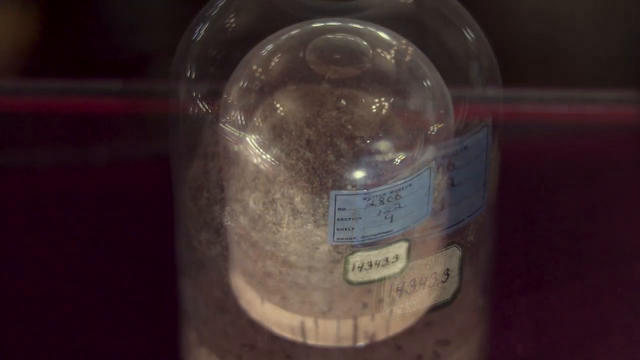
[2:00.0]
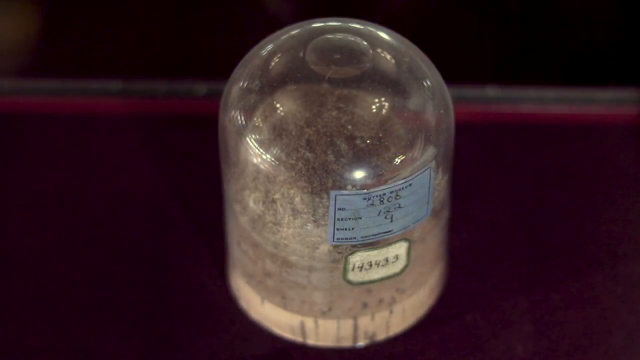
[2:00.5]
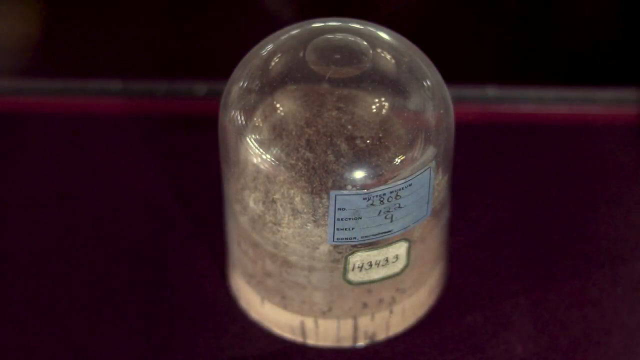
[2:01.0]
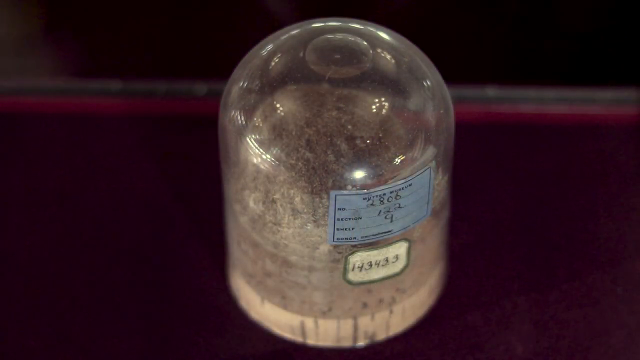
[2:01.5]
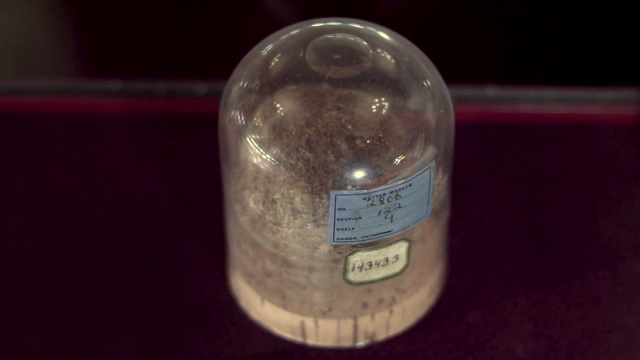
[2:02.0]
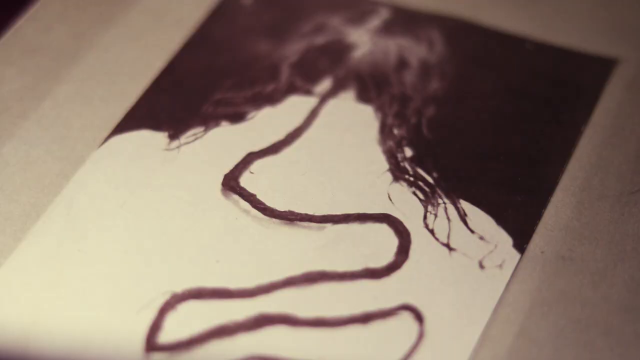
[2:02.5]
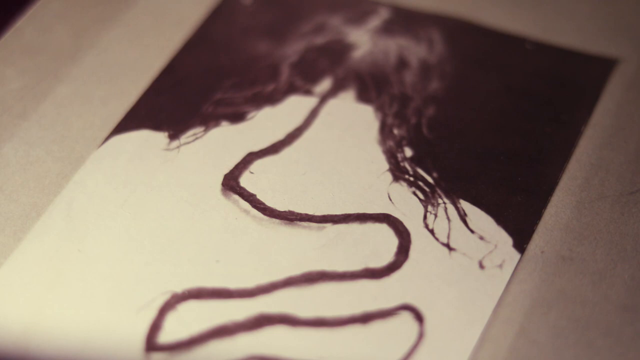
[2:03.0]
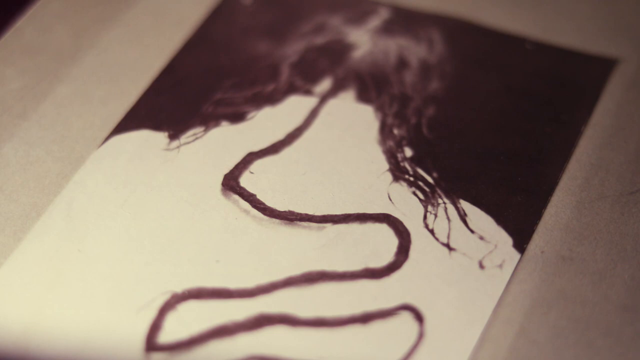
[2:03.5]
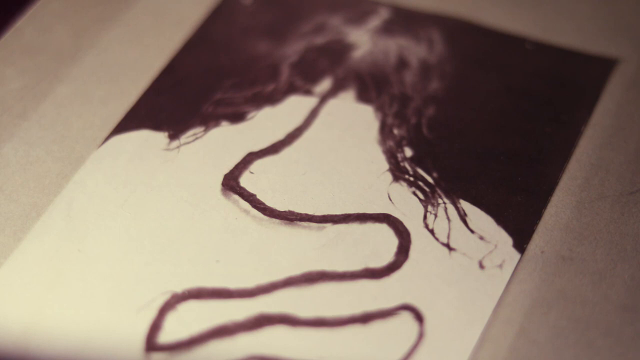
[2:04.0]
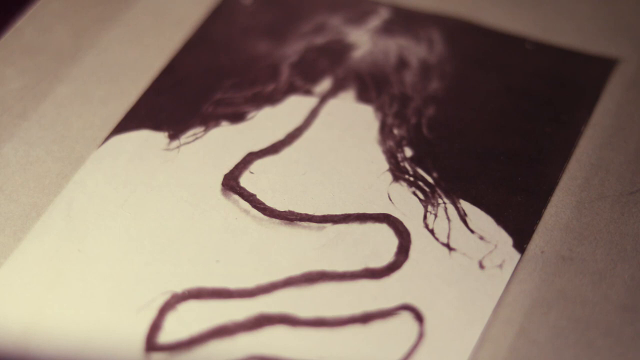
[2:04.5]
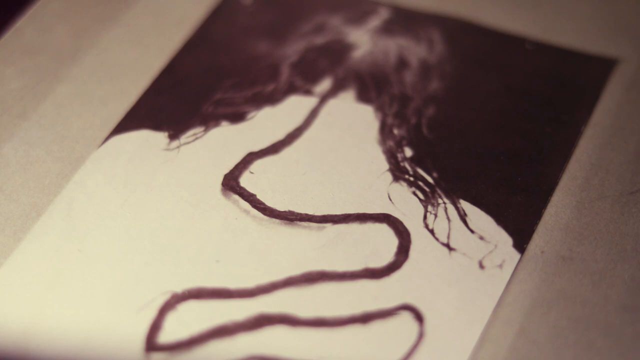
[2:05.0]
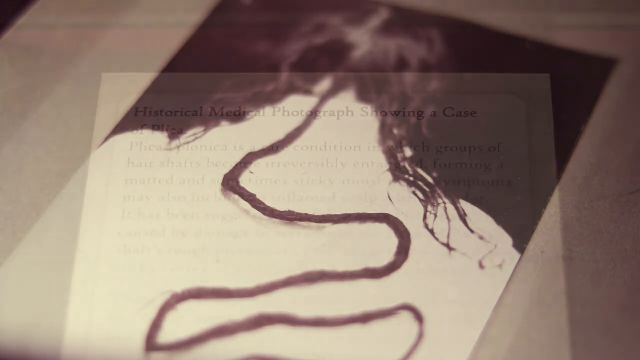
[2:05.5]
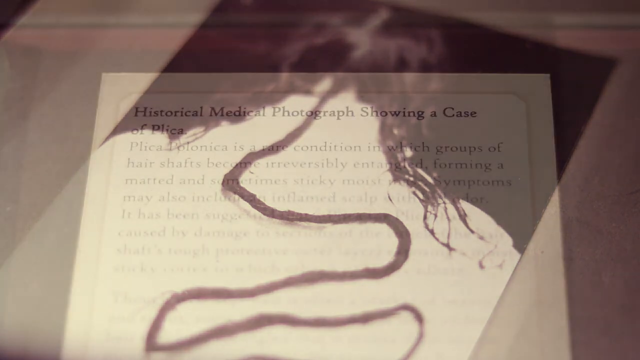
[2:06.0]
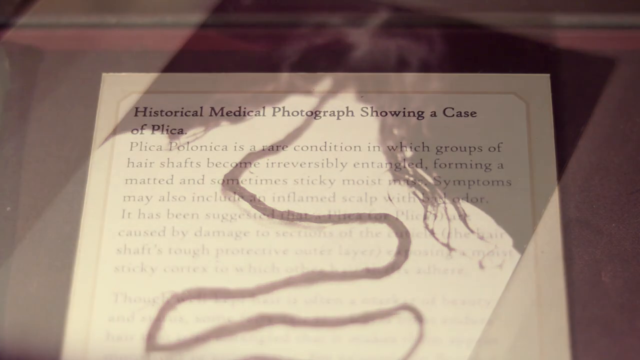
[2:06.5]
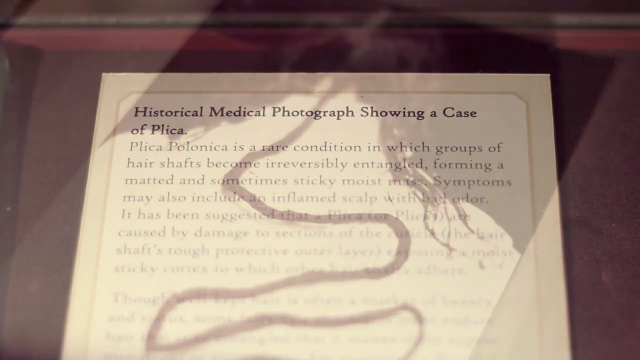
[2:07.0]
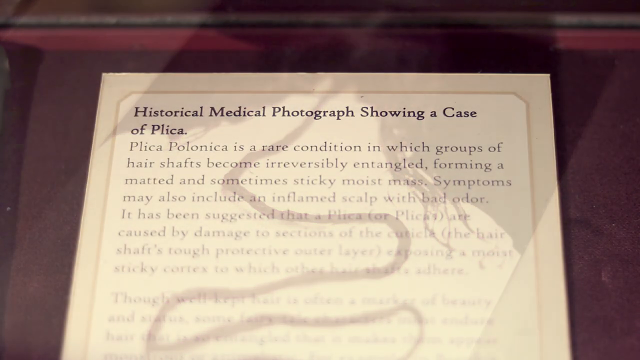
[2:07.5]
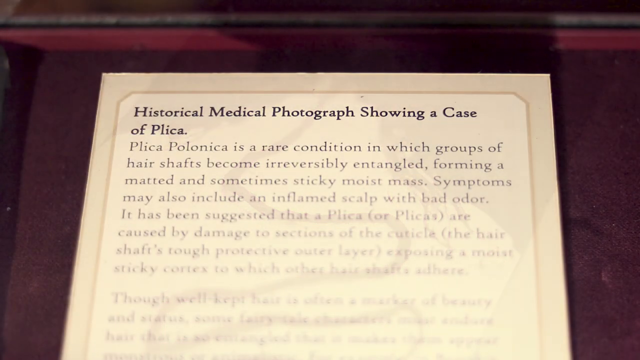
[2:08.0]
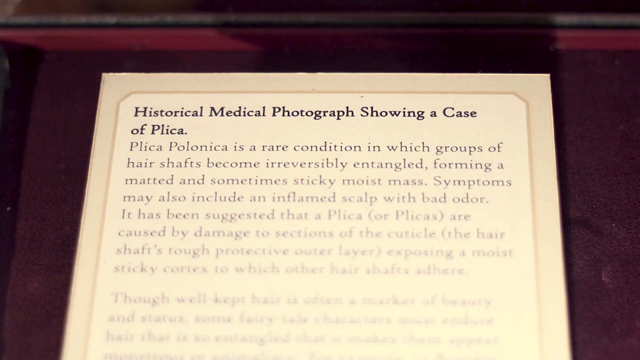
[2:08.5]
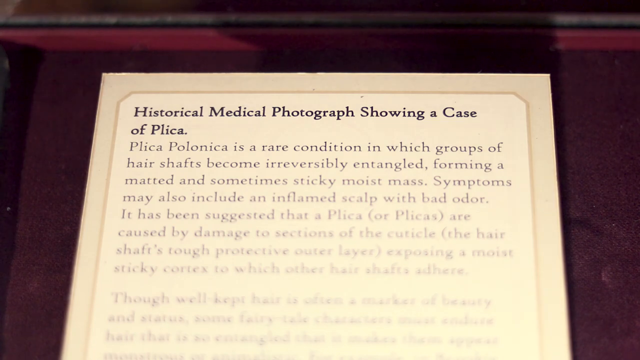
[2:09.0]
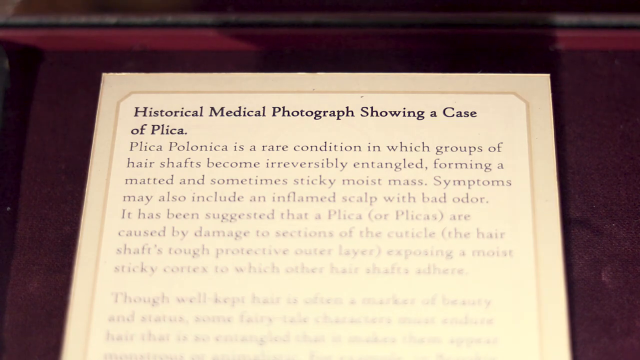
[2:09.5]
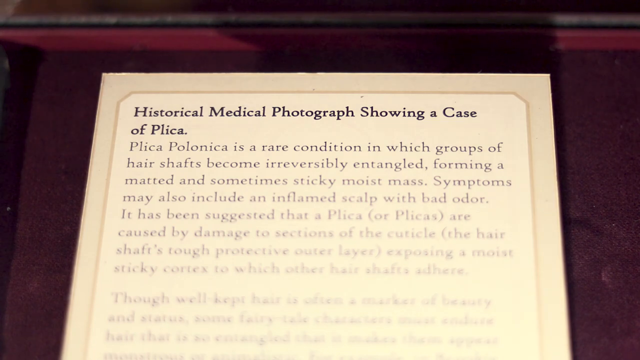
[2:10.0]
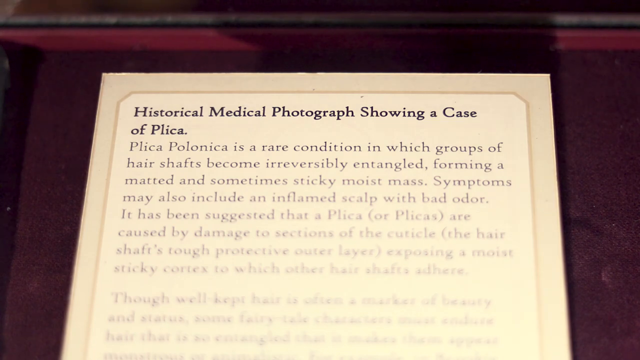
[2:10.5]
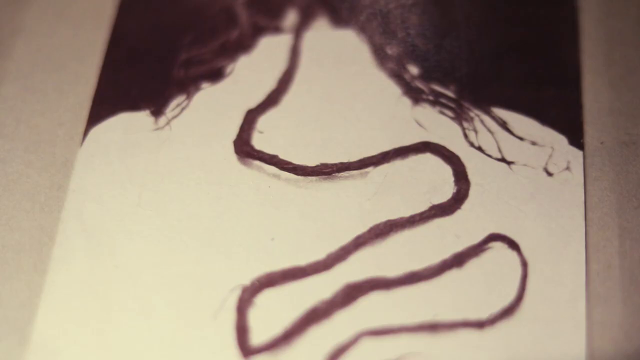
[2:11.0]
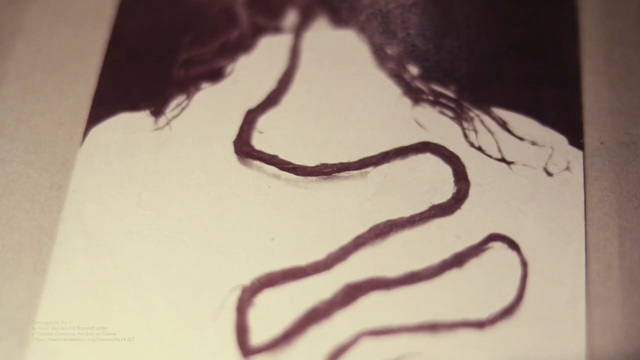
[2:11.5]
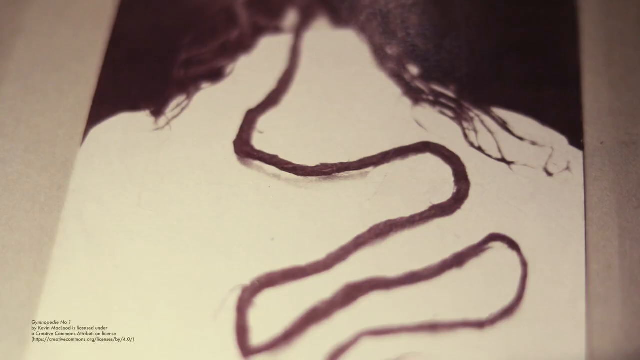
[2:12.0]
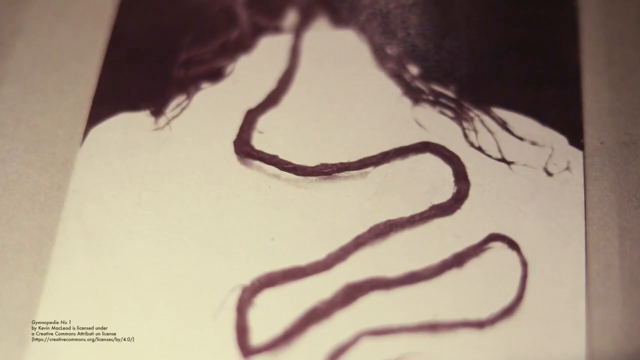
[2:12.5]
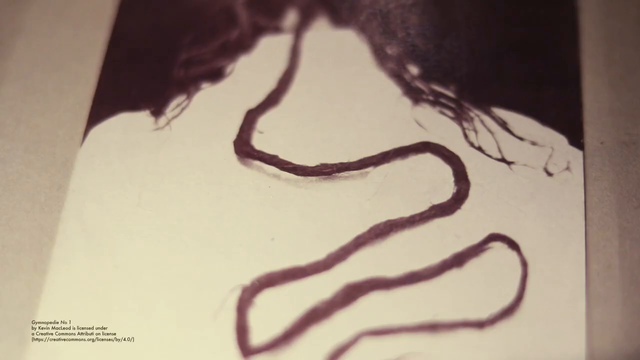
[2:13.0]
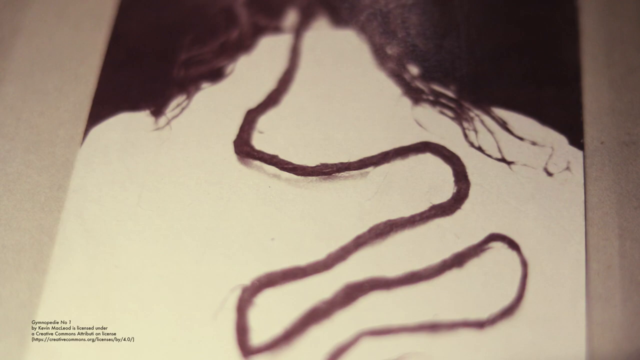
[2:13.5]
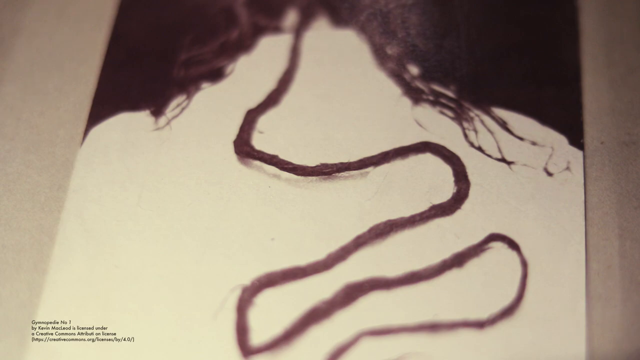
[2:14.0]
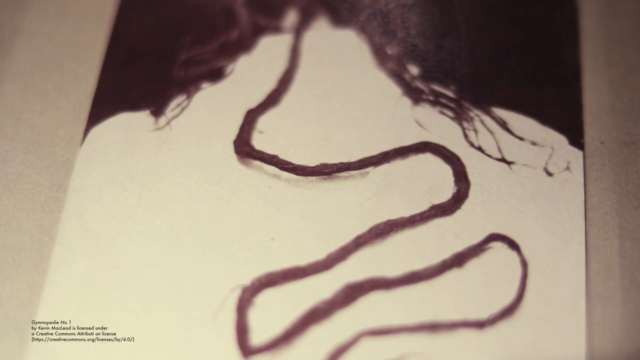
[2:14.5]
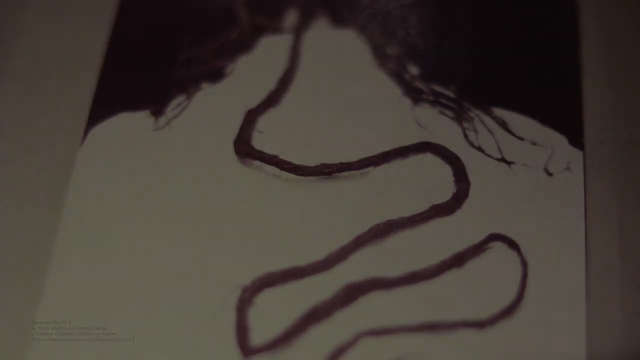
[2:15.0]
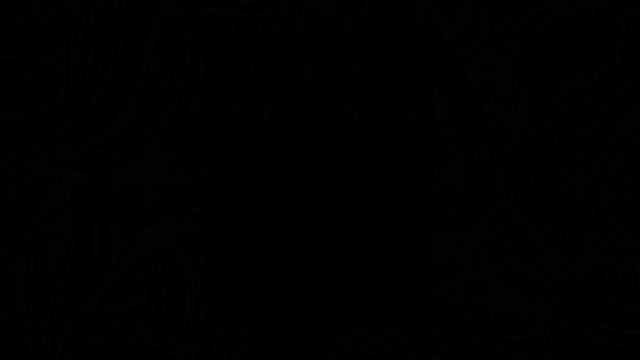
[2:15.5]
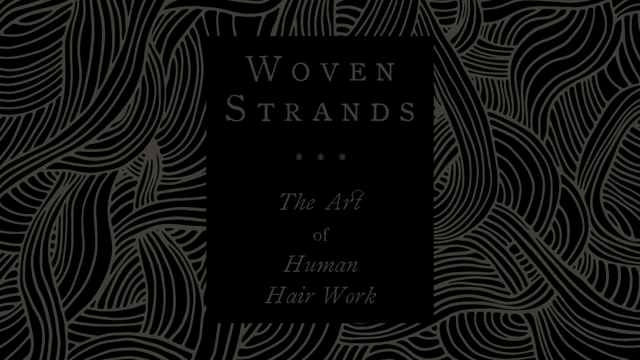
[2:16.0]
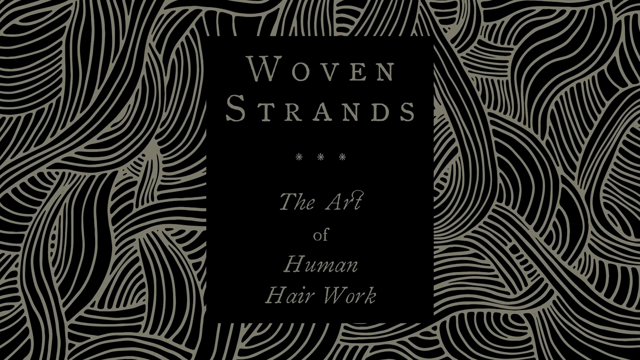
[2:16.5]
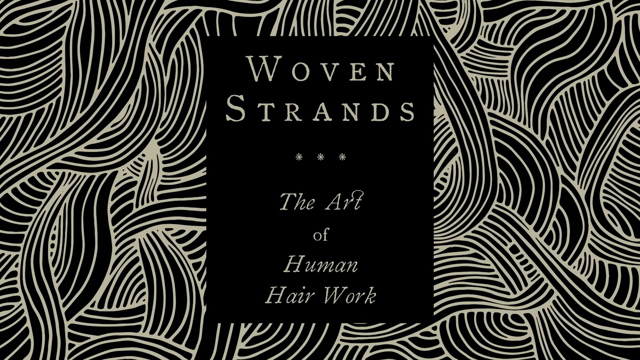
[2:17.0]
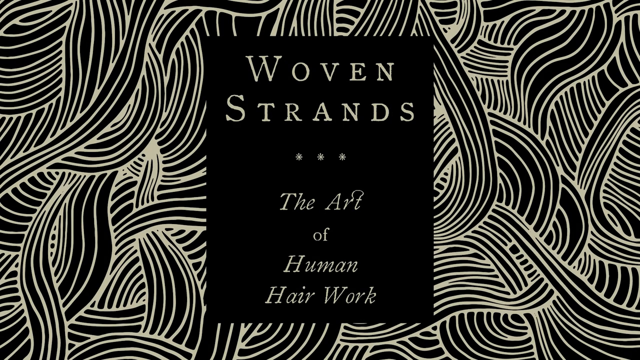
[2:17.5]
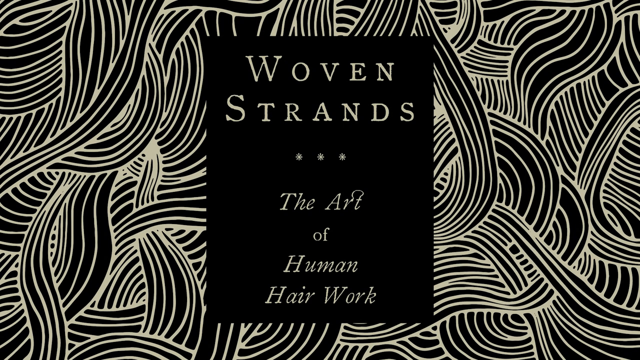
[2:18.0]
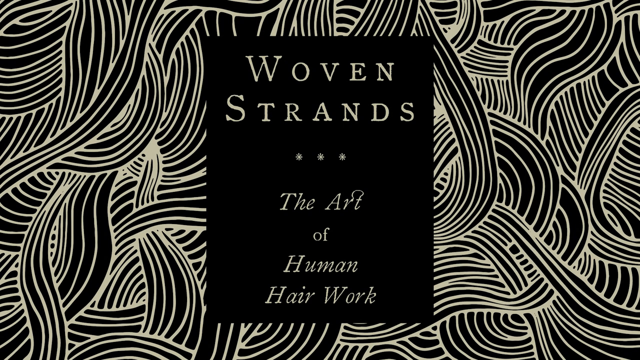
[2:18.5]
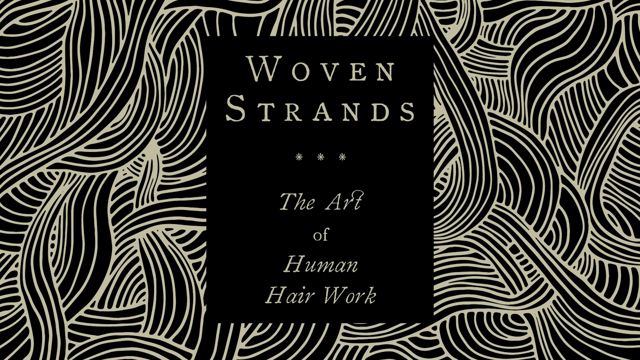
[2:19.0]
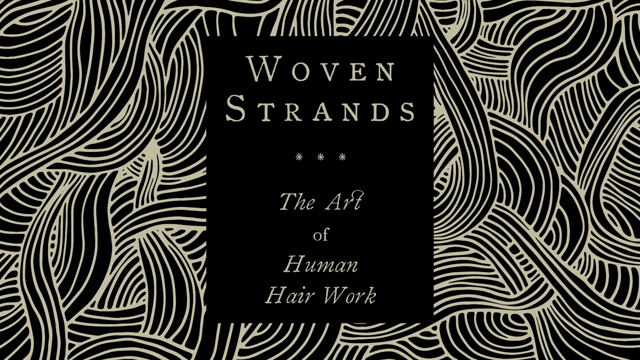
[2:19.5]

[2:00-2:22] The glass cloche covering the hair ball has the blue label stuck to its front. A photograph follows of what looks like a woman with a very long strand of hair coming down her back in an S-shape. A square-shaped card label reads "historical medical photograph showing a case of plica. Plica polonica is a rare condition in which groups of hair shafts become irreversibly entangled, forming a matted and sometimes sticky, moist mass. Symptoms may also include an inflamed scalp with bad odour. It has been suggested that a plica are caused by damage to sections of the cuticle." The writing fades out towards the bottom. The photograph is shown again. The video then returns to the initial screen: black and white wavy lines in the background, "woven strands" in capital white text on a black background, three asterisks, and beneath this "the art of human hair work", with the R and the T in "art" fastened together by a loop that looks a little like hair.